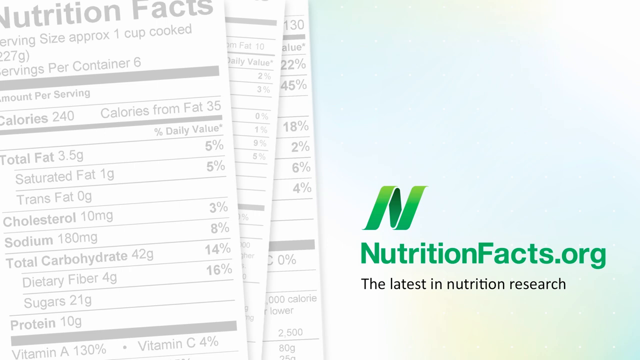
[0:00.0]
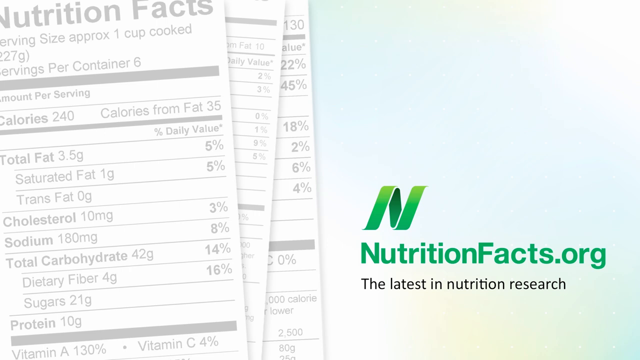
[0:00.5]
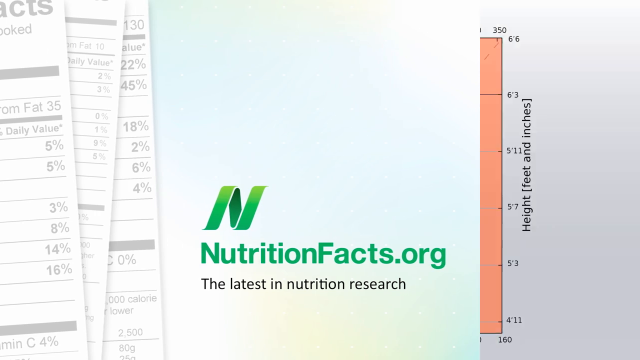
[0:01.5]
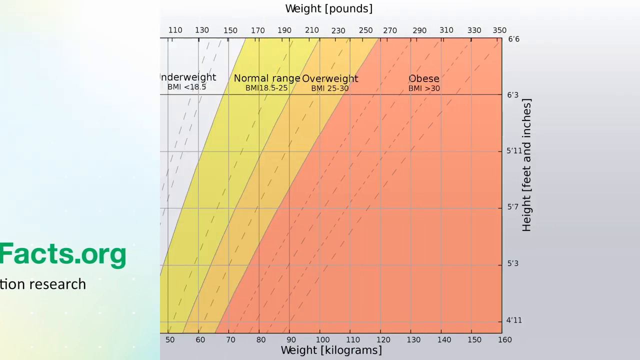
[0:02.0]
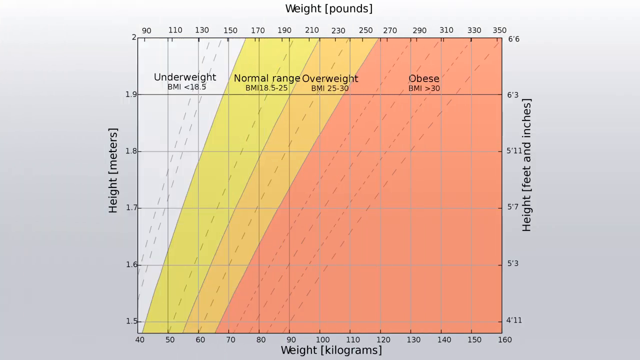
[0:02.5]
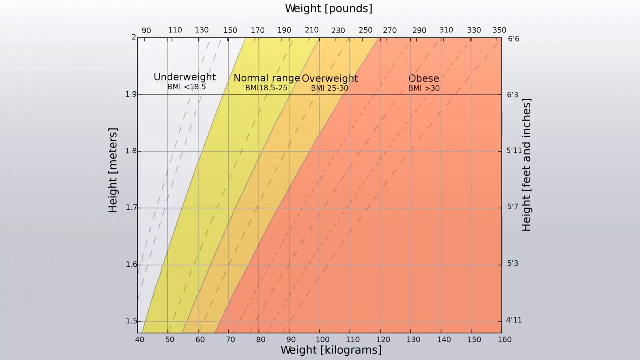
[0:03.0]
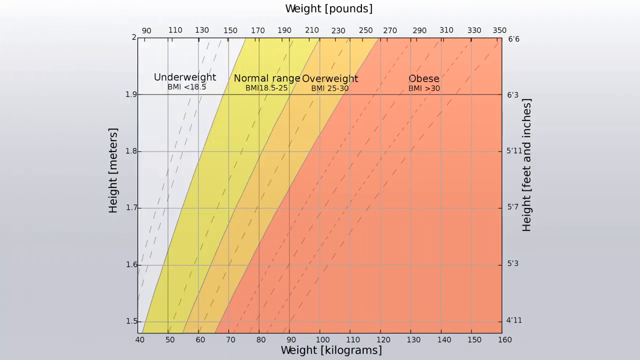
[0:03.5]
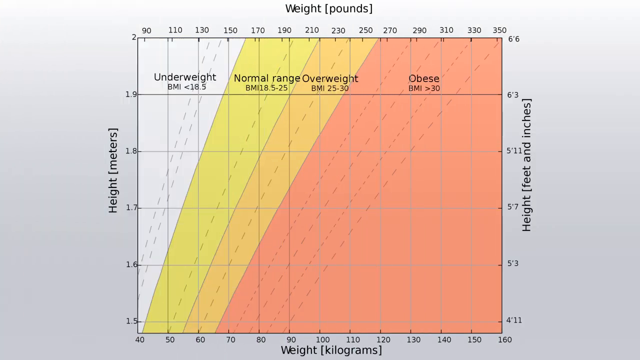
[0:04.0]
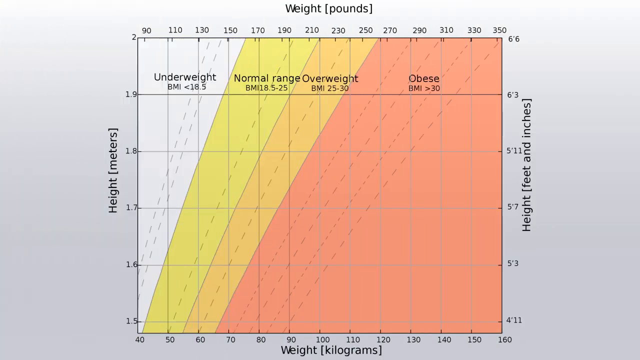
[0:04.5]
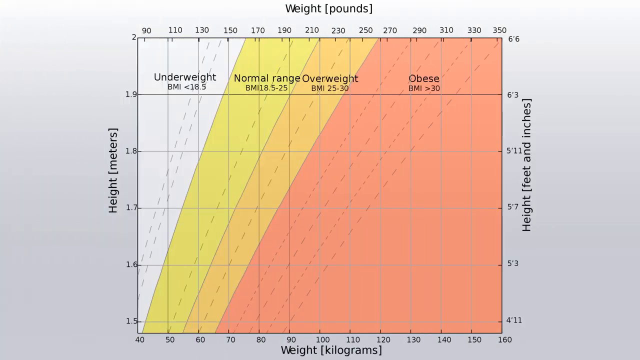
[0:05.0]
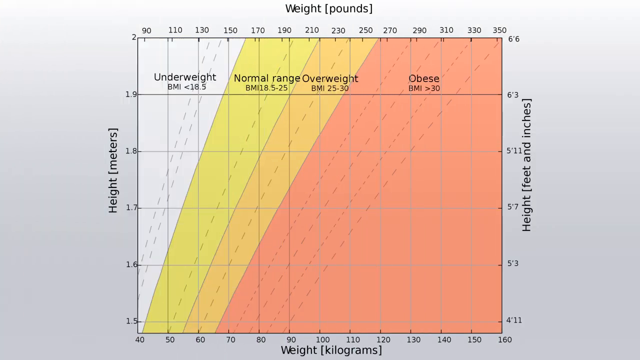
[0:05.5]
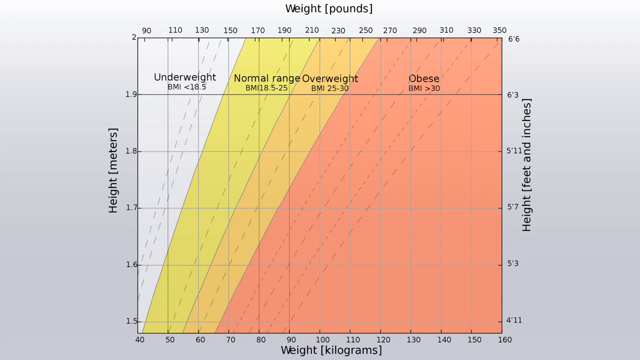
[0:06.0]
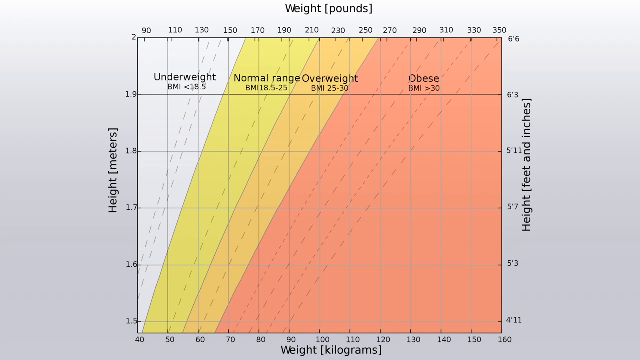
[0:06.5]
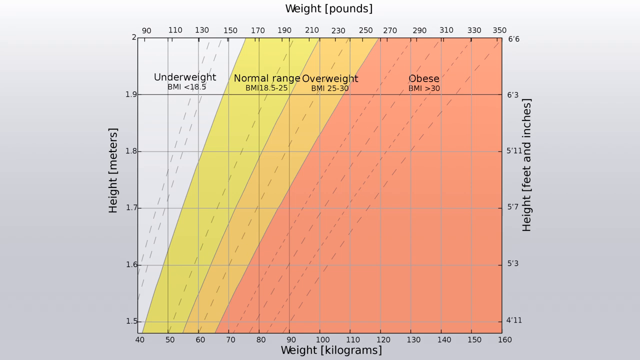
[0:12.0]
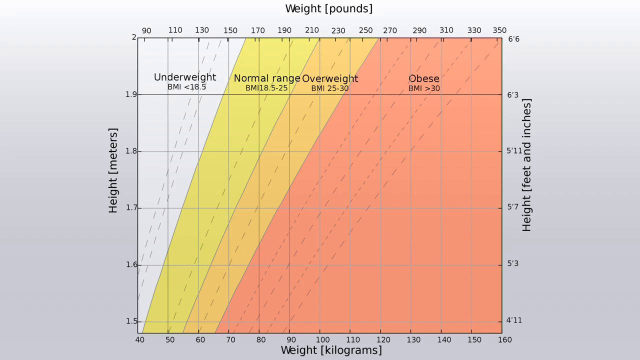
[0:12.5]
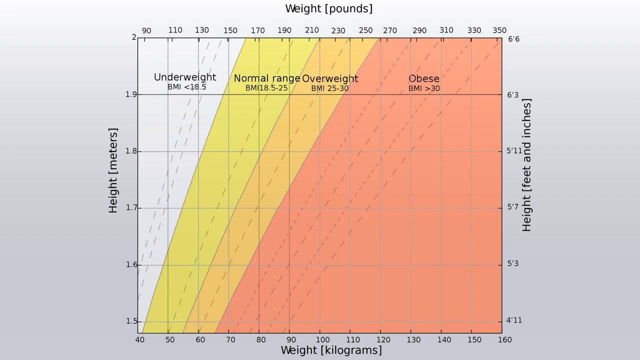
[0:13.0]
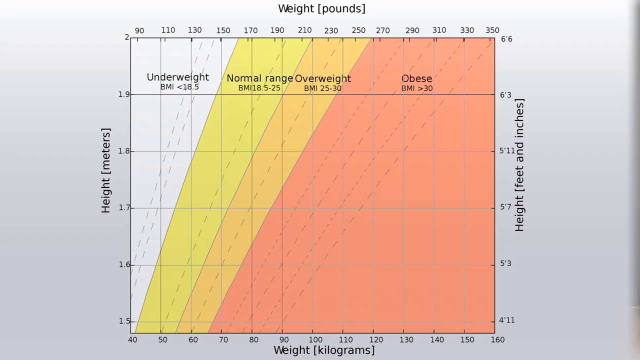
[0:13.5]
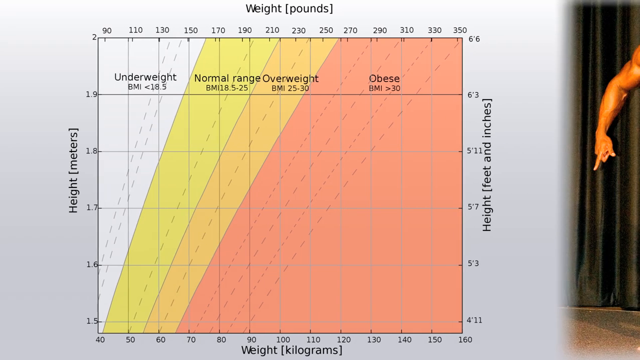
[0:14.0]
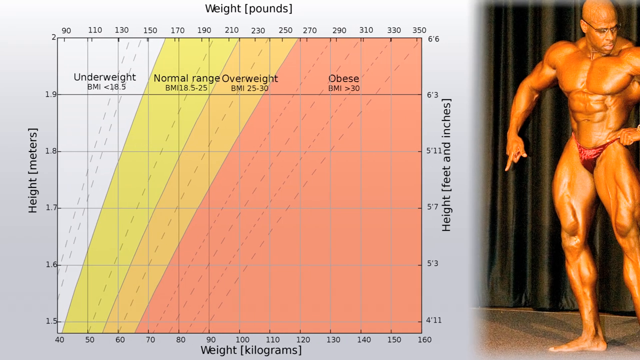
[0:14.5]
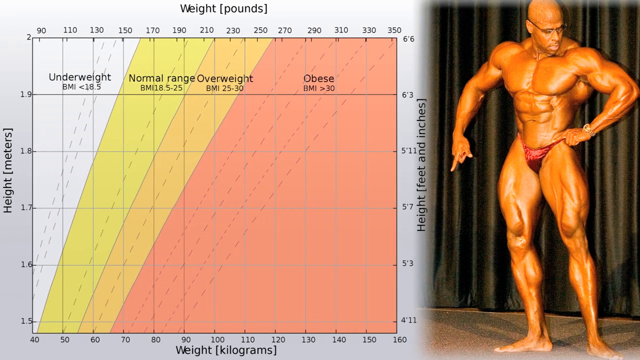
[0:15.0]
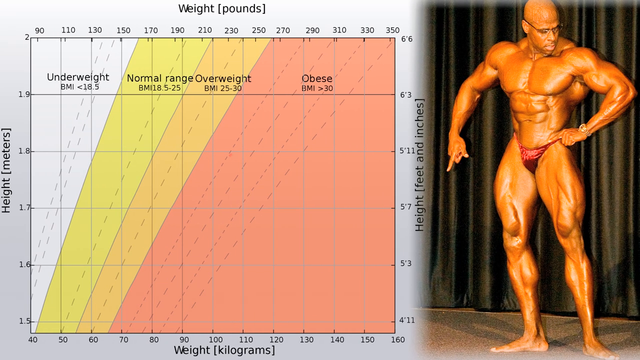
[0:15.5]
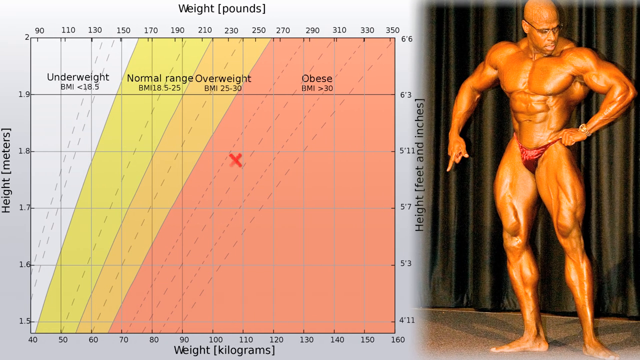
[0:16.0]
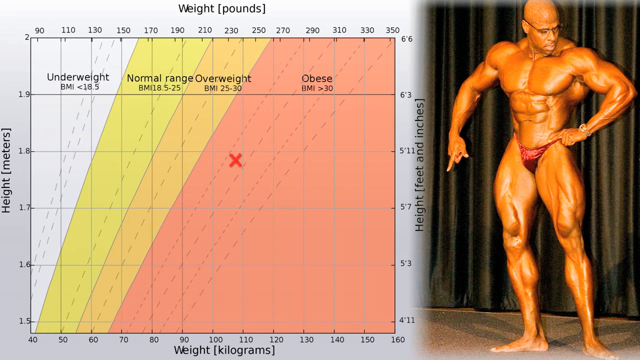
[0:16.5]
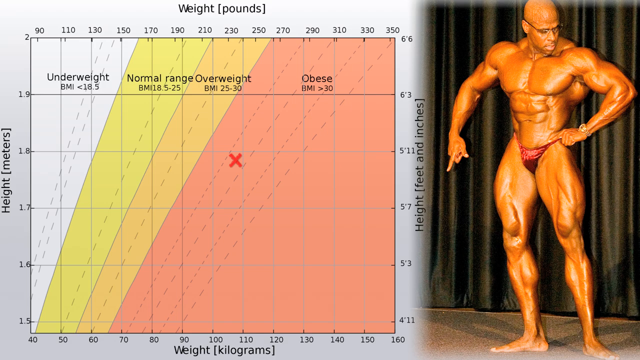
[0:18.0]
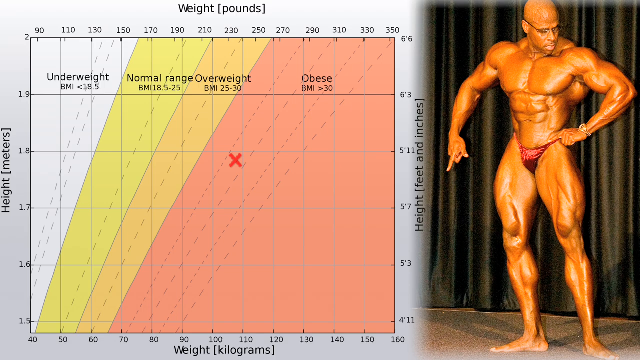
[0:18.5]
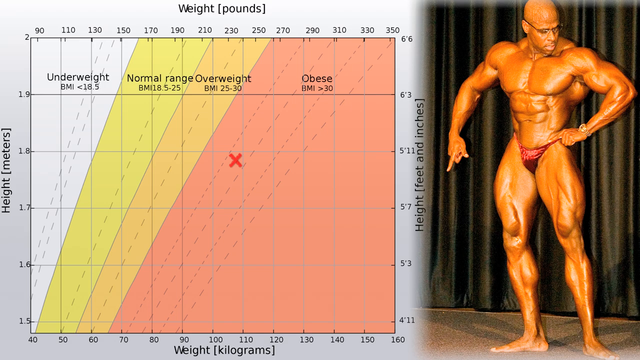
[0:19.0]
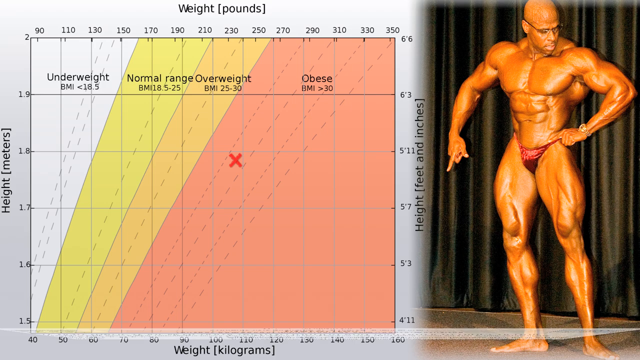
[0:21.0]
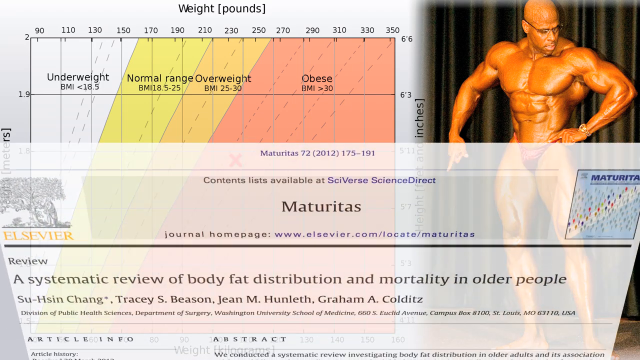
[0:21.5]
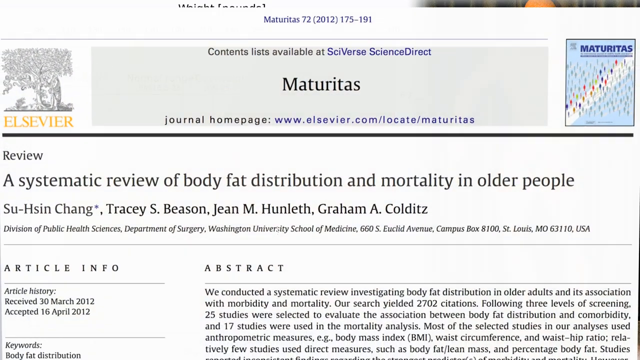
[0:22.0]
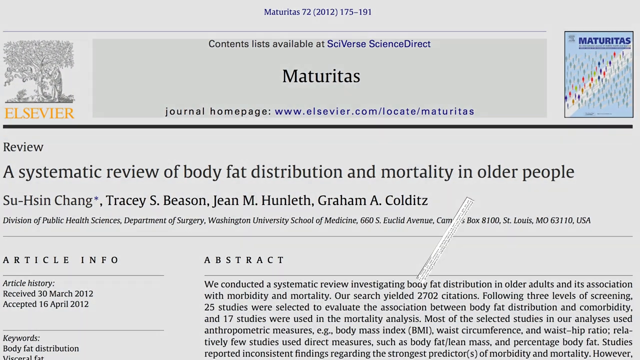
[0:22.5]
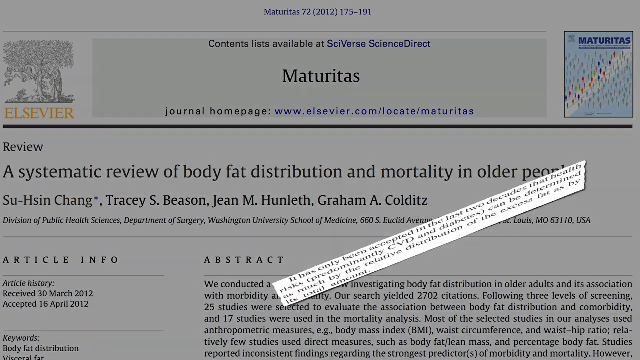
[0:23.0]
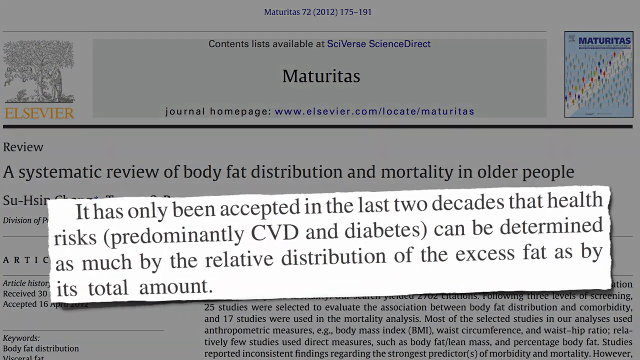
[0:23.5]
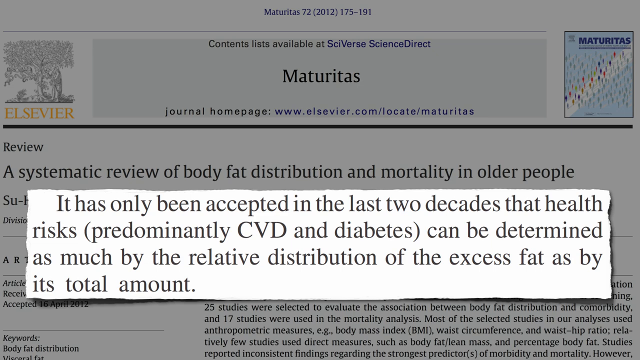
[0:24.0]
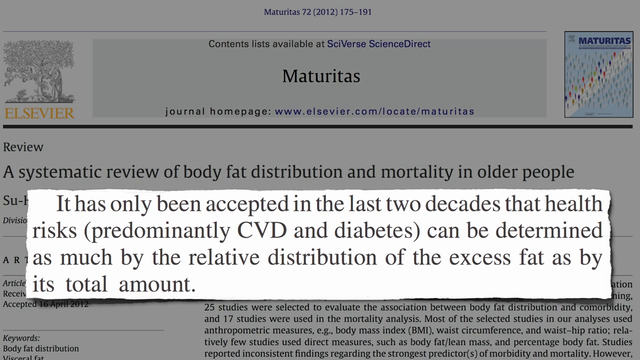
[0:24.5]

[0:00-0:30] The video appears to be sponsored by NutritionFacts.org: the NutritionFacts.org logo is in the lower right portion of the screen, and underneath it the text reads "the latest in nutrition research." The video then transitions to a page showing a chart; the upper part of the chart gives weight in pounds, and the numbers below give weight in kilograms. An image slides in from the right side of the screen, showing a bodybuilder standing on stage in a pose. Next comes another journal piece, apparently about nutrition. The final page is titled "a systematic review of body fat distribution and mortality in older people," with its several authors credited underneath the headline.